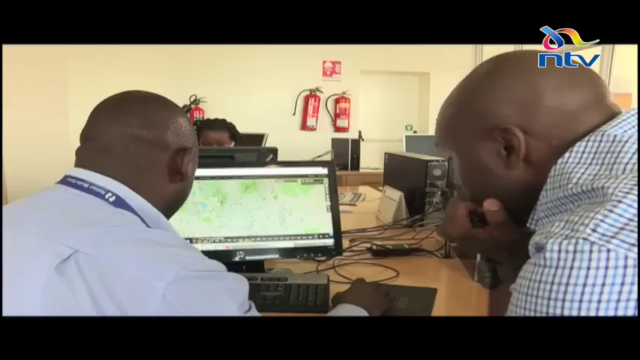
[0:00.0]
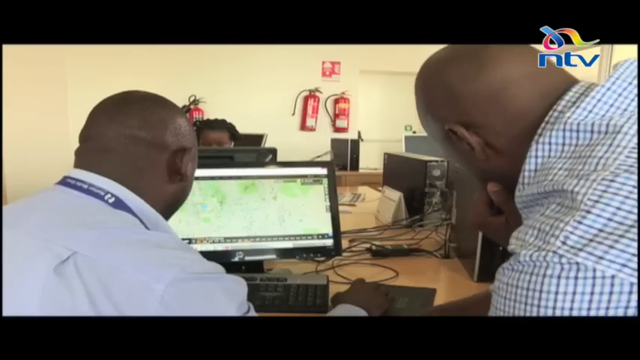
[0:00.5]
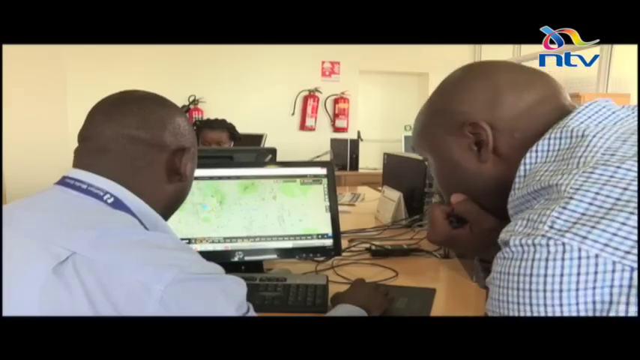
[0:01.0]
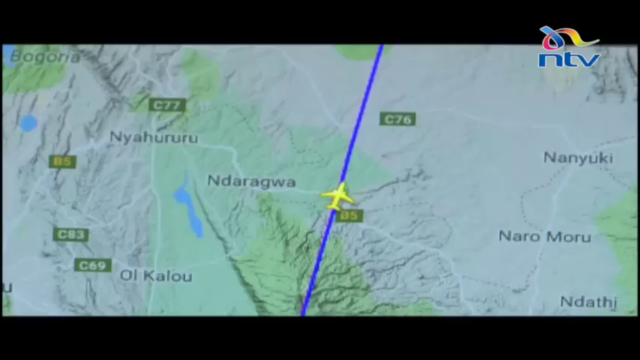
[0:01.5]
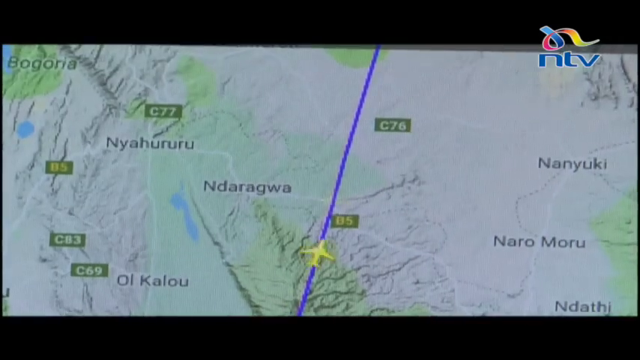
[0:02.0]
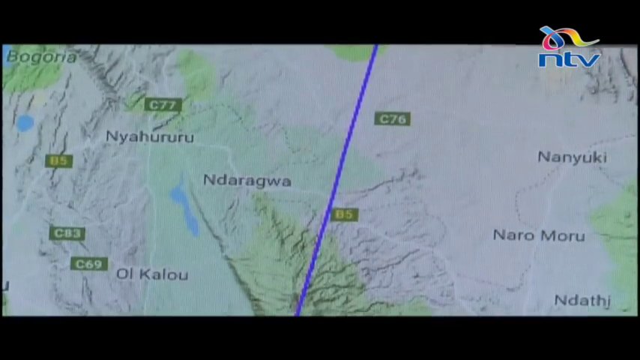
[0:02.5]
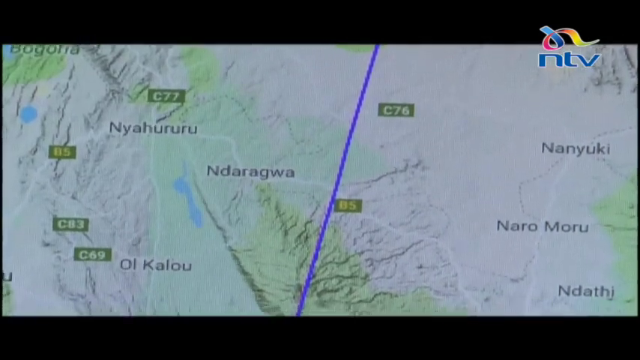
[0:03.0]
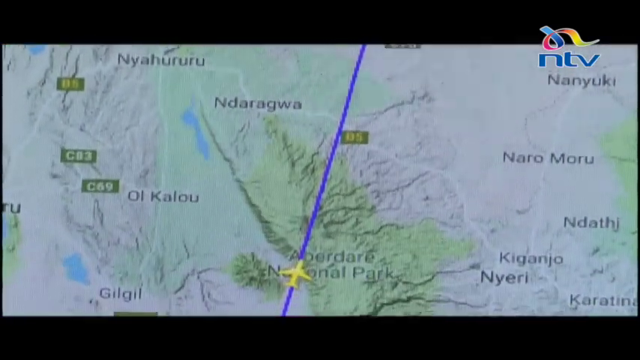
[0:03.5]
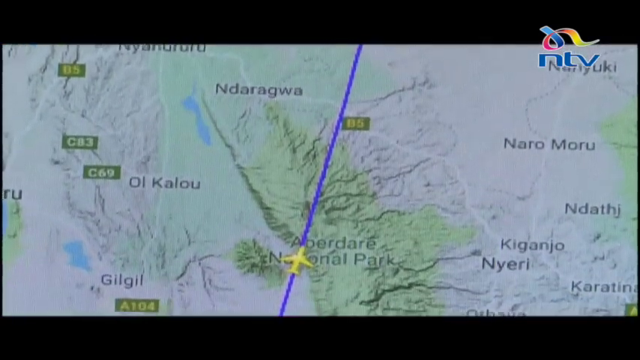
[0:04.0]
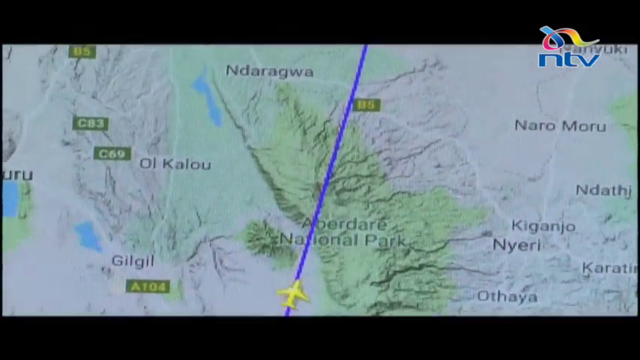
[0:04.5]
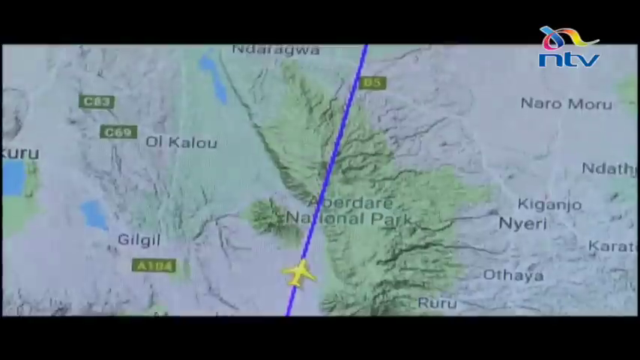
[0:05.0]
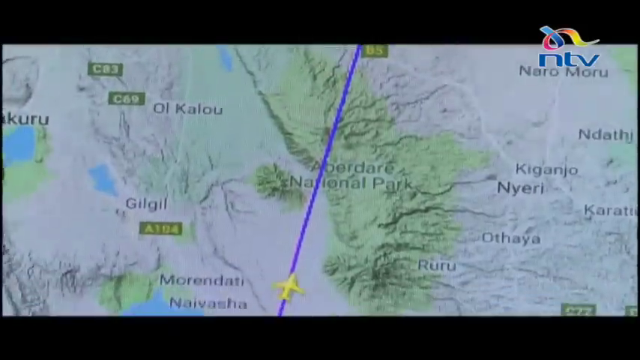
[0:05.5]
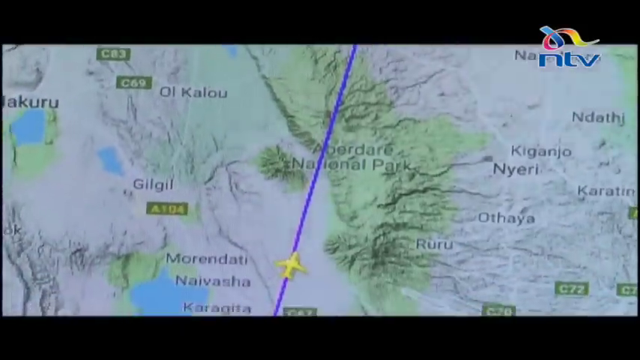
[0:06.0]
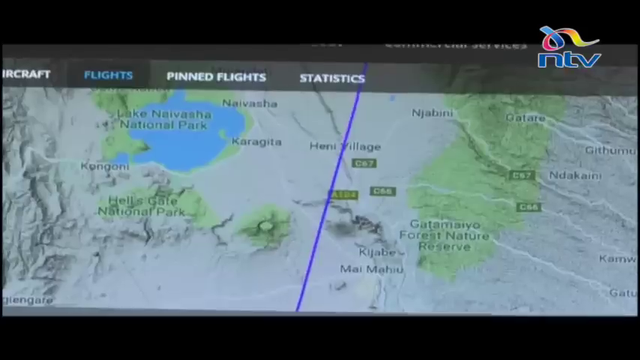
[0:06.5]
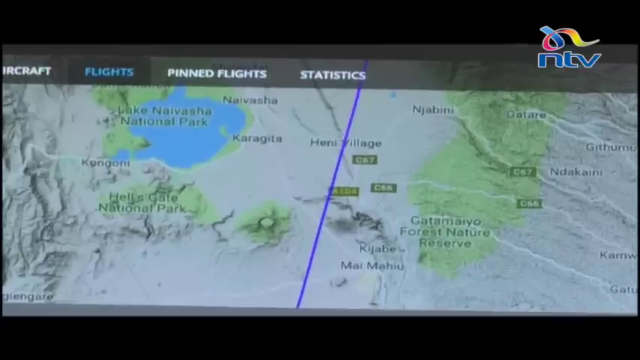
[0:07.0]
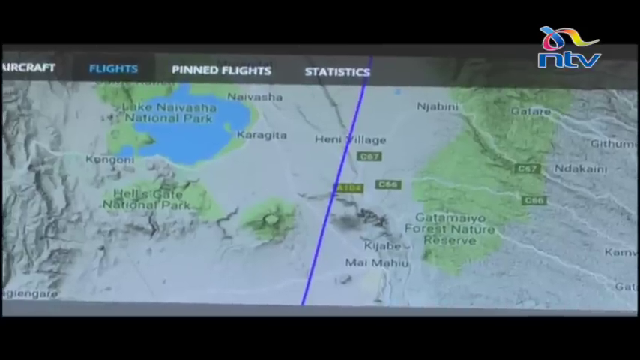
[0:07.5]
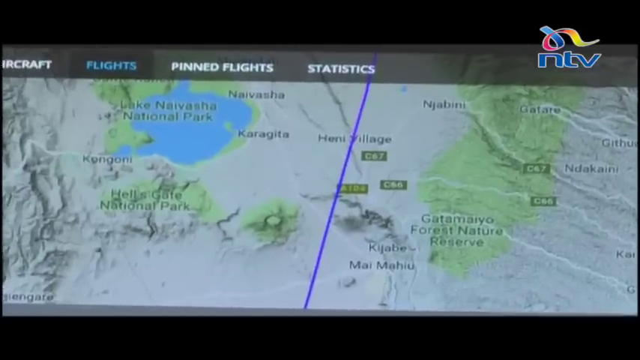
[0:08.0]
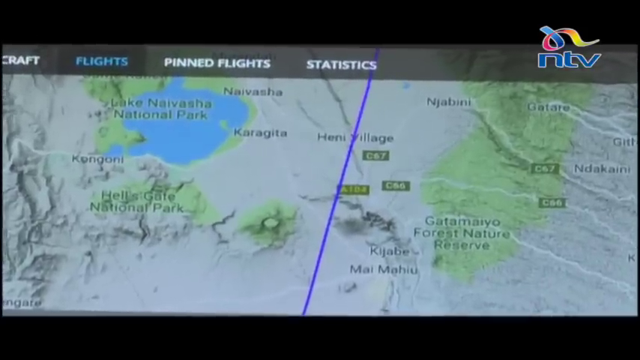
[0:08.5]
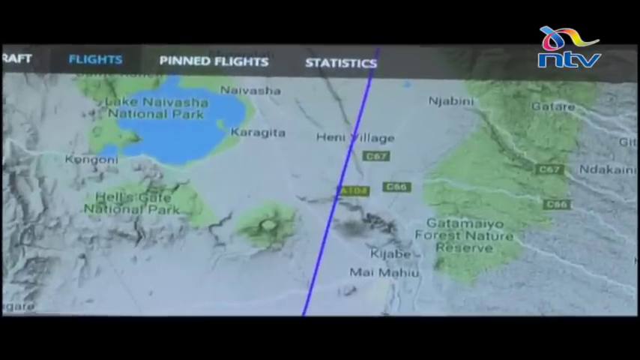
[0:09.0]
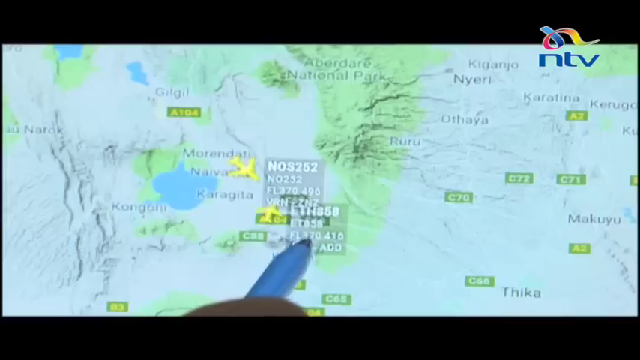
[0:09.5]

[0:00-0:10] Three people are in what looks like a workplace. A computer is on a desk or table, and they are busy with it; something is displayed on the computer screen in front of them. A lady in the background, who is hard to see clearly, faces the camera and is also working on the computer. Two men watch and work on the computer. One man wears a powder blue T-shirt with a blue band around his neck, possibly a key holder. The other man also wears a powder blue shirt, described as a scotch shirt. The men are grown up, perhaps around 41 or 42. The screen they are watching shows a map with a flight pin and flight statistics.